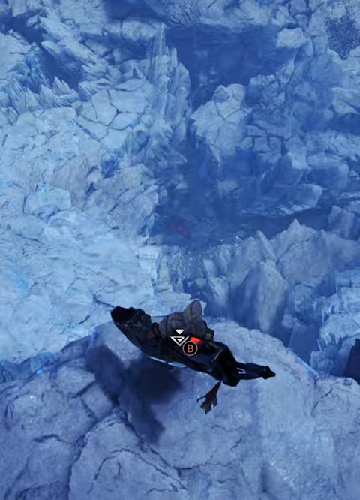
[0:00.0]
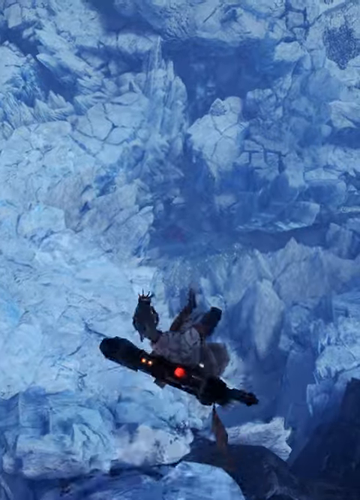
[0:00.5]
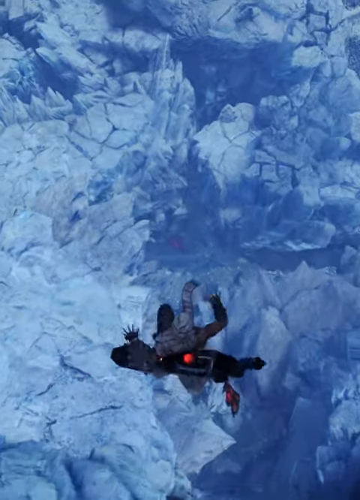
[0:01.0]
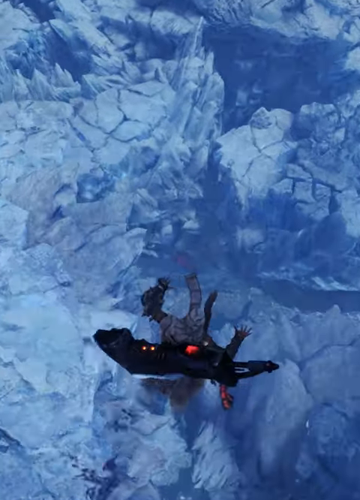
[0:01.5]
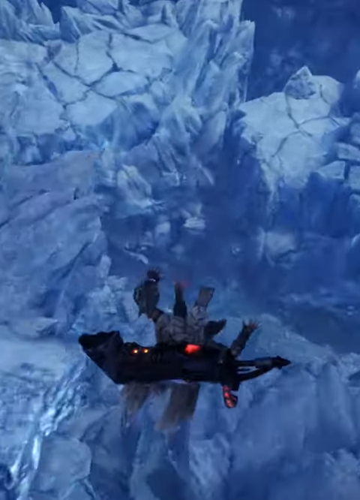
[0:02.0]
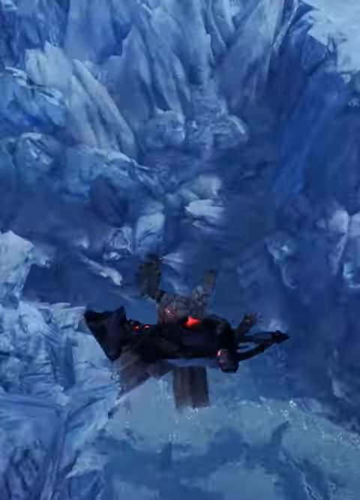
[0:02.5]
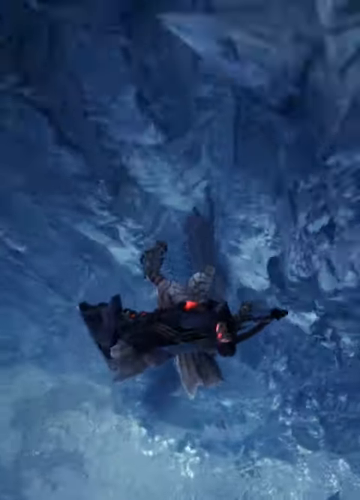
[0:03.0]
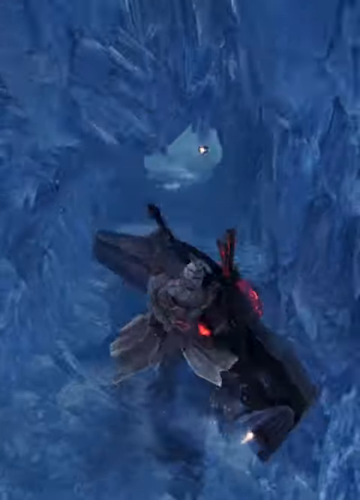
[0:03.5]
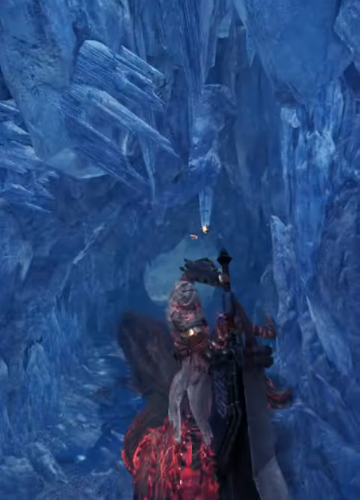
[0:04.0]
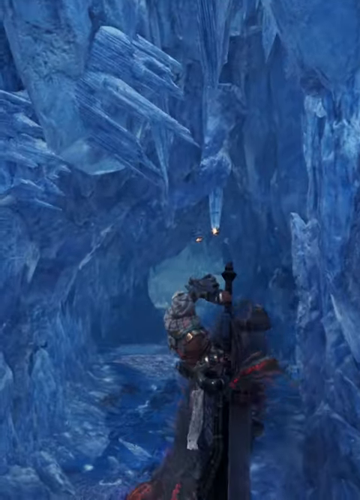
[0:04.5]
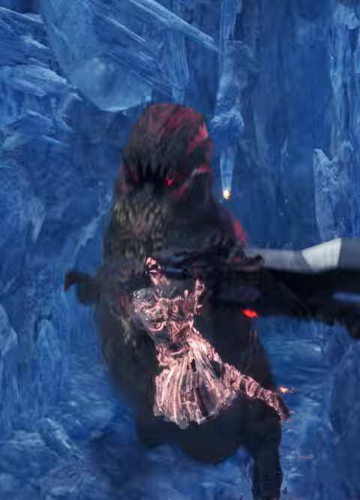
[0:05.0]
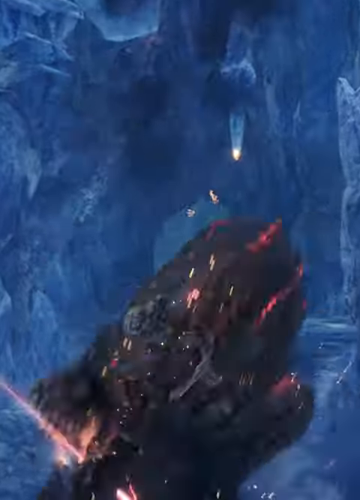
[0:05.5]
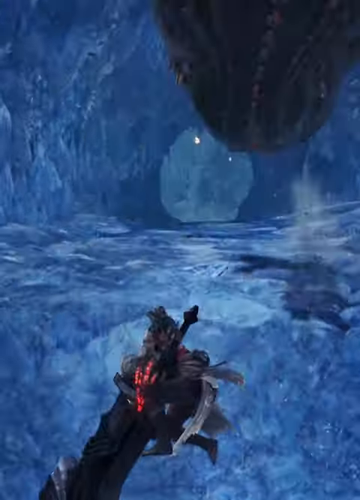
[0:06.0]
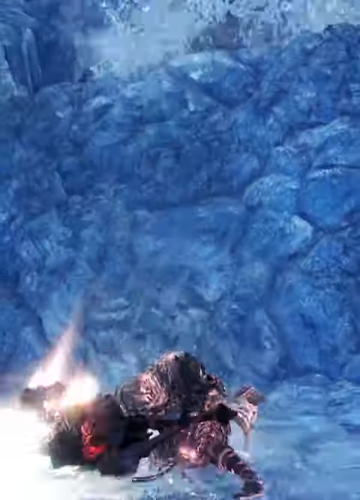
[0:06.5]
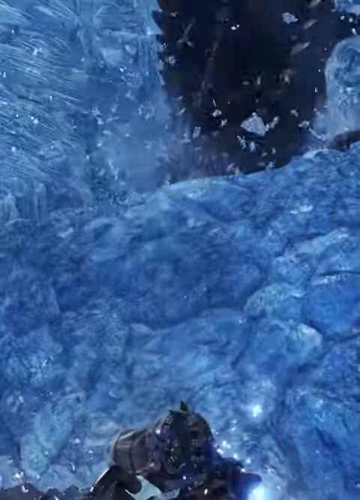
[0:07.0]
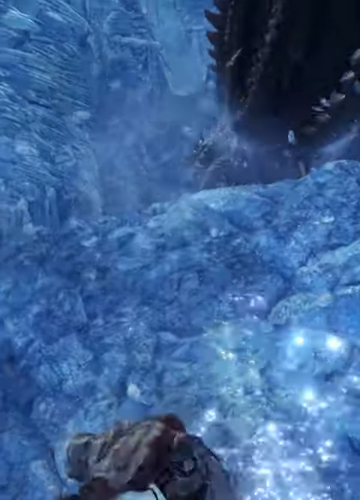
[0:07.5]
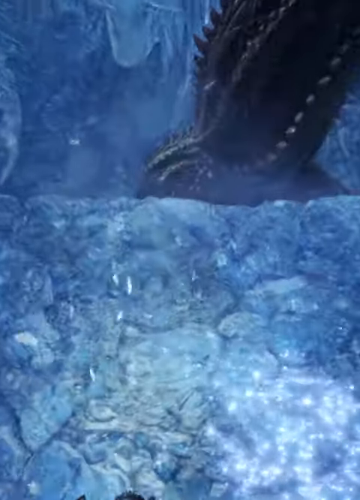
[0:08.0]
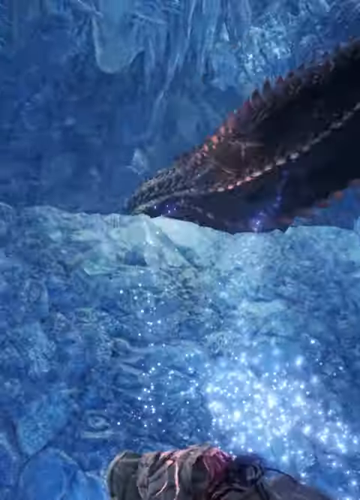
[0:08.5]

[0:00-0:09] In footage from an unidentified video game, a computer-generated character jumps off a cliff into a sort of icy, rocky landscape. The jump is very tall and deep. On the way down, the character pulls out a huge great sword mounted on their back and swings it toward a monster it runs into. The sword hits the monster and seems to do damage, but the character then falls and lands on the ground at the bottom of the chasm, with some sort of explosive magic around them as they hit the ground. The background is mostly a sort of bluish, whitish rock and ice. The monster struck by the sword is hard to make out; it seems possibly to be a dinosaur or a dragon.